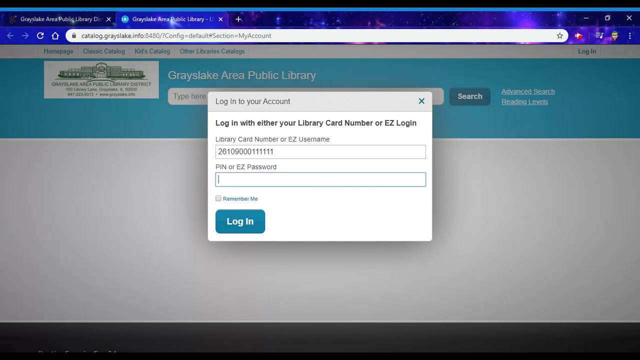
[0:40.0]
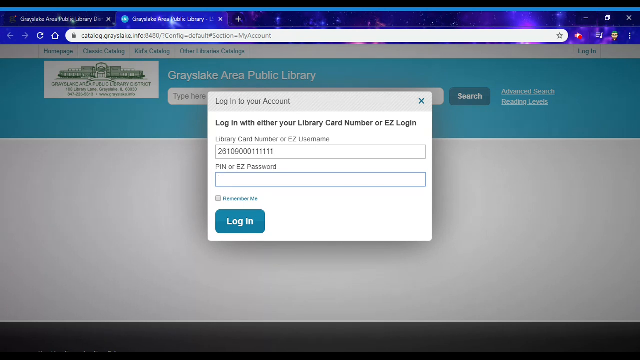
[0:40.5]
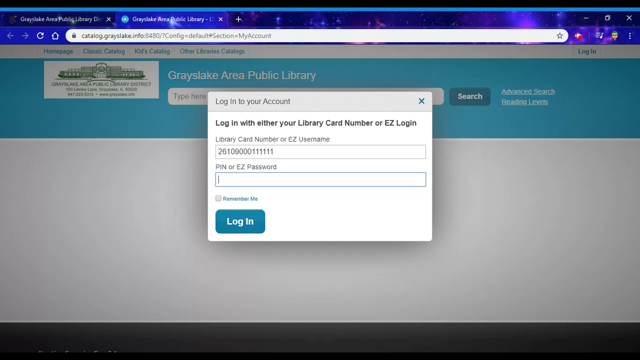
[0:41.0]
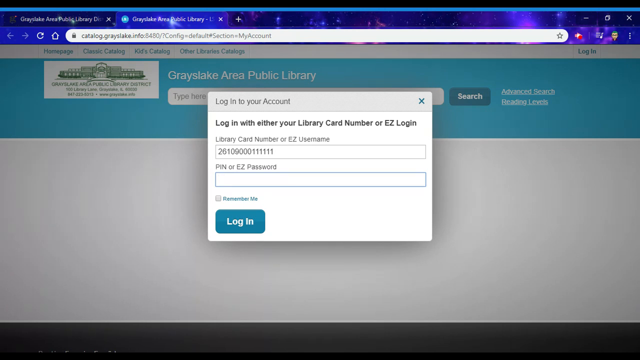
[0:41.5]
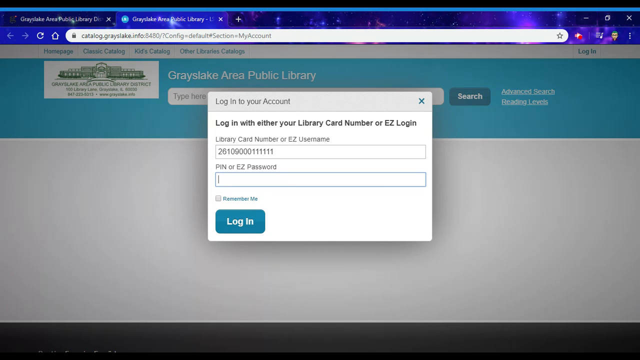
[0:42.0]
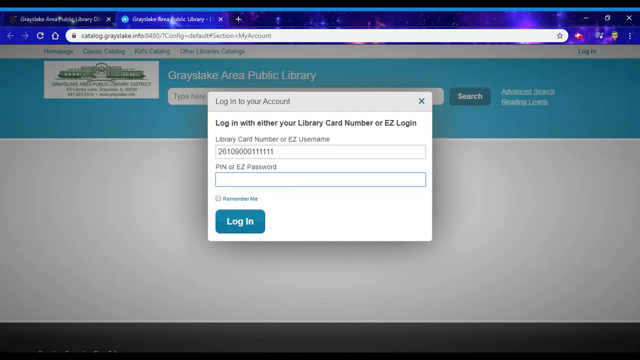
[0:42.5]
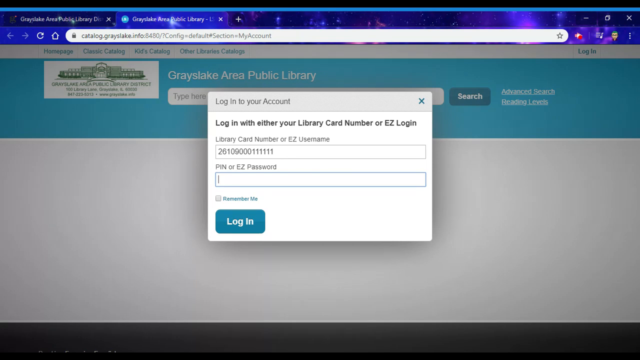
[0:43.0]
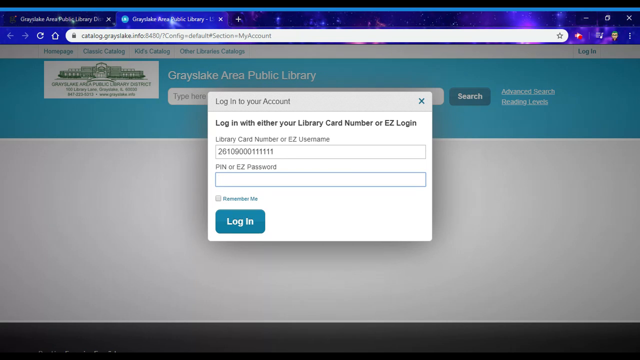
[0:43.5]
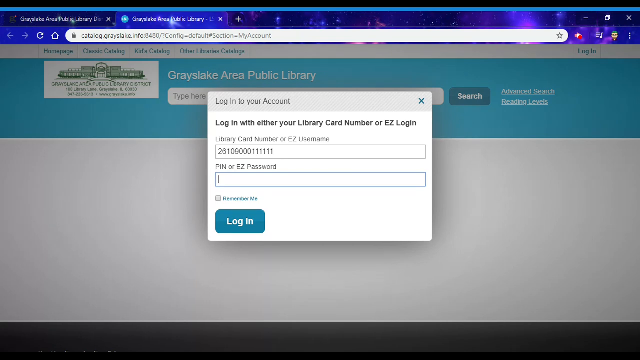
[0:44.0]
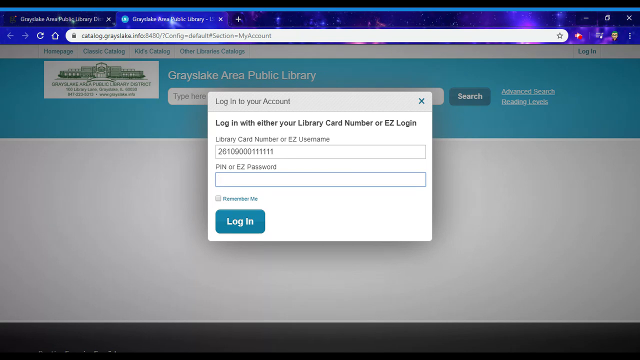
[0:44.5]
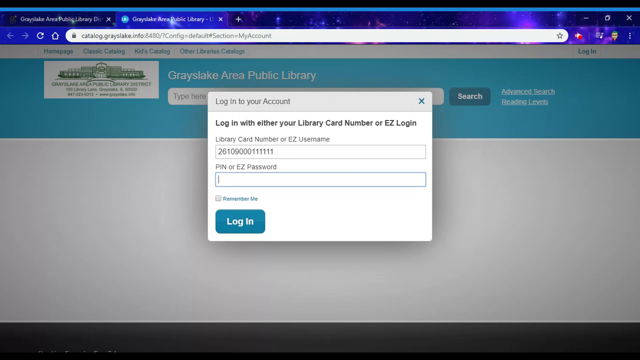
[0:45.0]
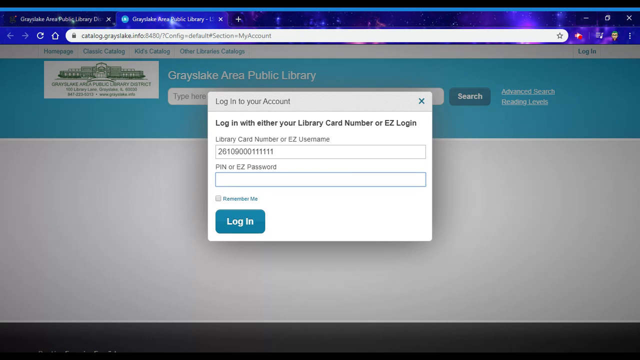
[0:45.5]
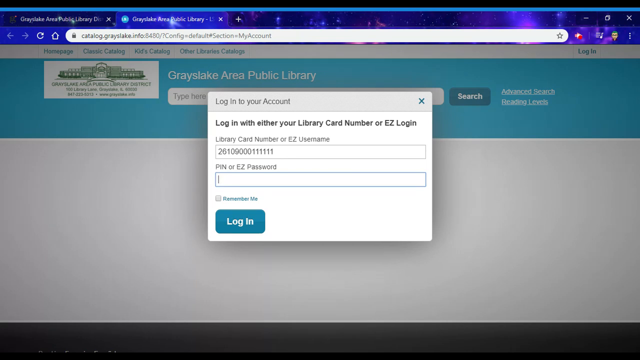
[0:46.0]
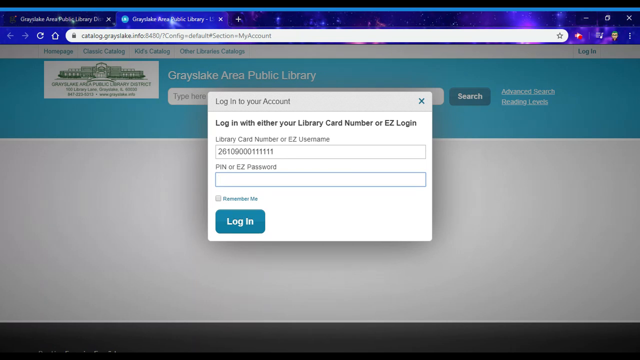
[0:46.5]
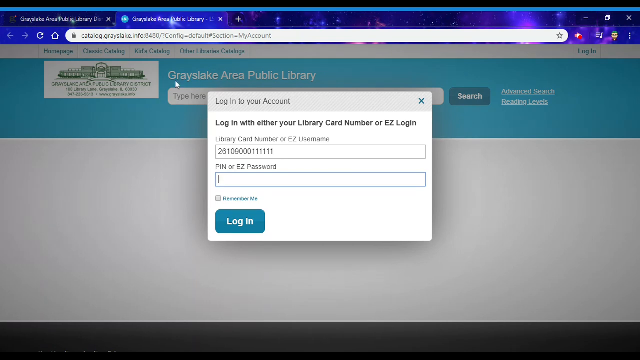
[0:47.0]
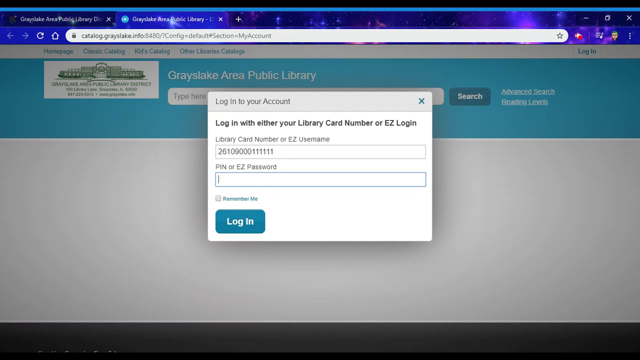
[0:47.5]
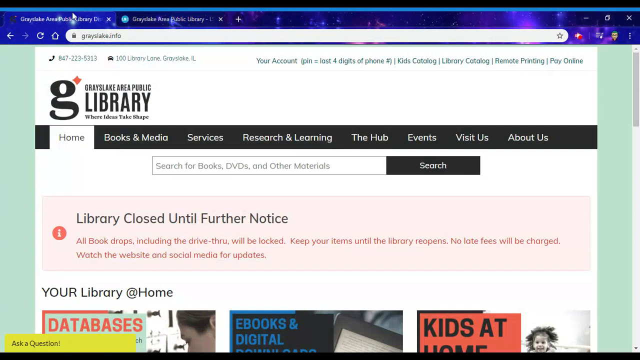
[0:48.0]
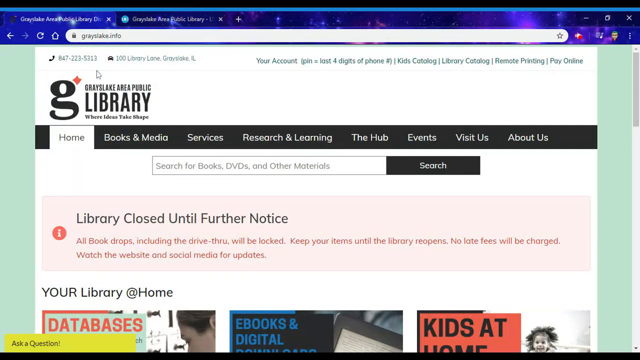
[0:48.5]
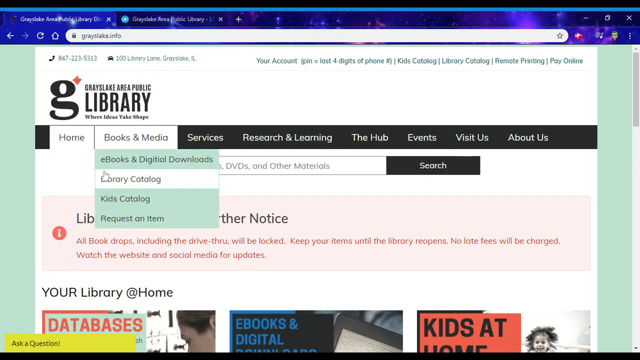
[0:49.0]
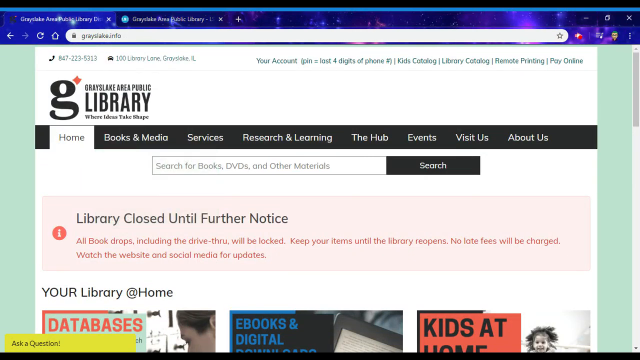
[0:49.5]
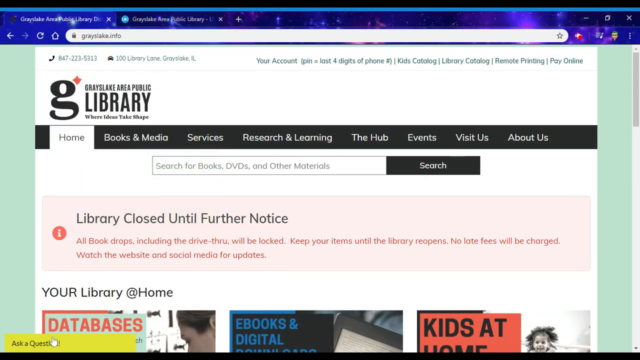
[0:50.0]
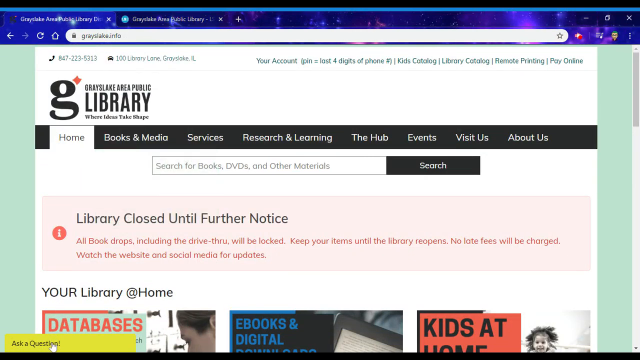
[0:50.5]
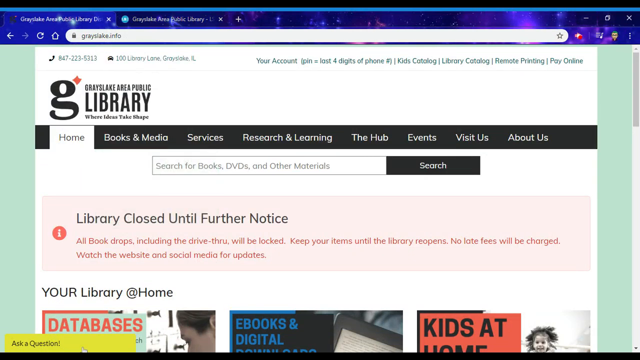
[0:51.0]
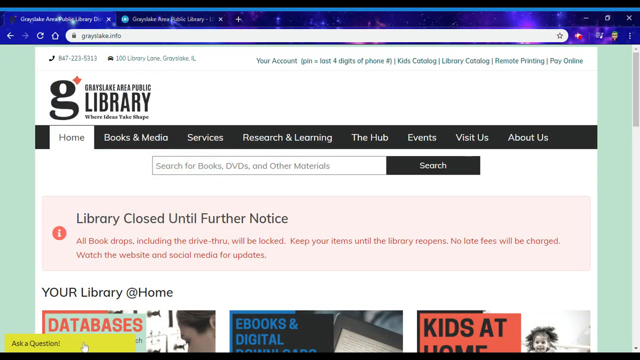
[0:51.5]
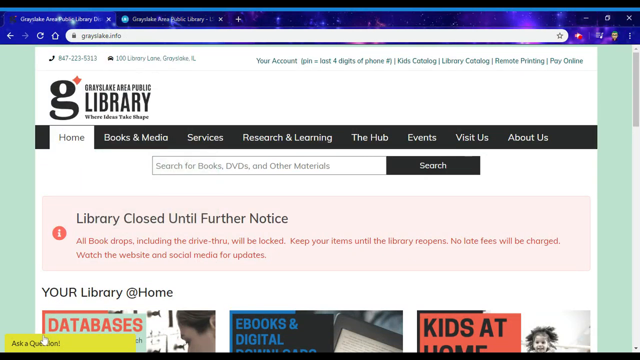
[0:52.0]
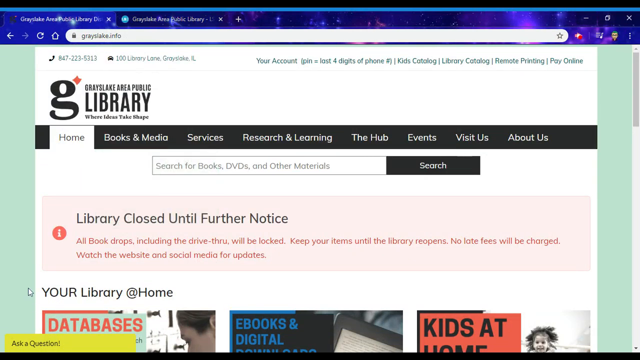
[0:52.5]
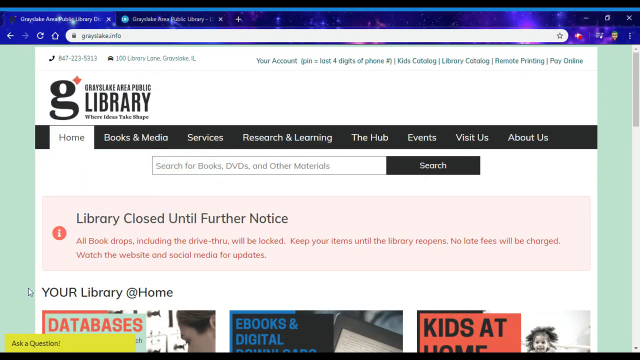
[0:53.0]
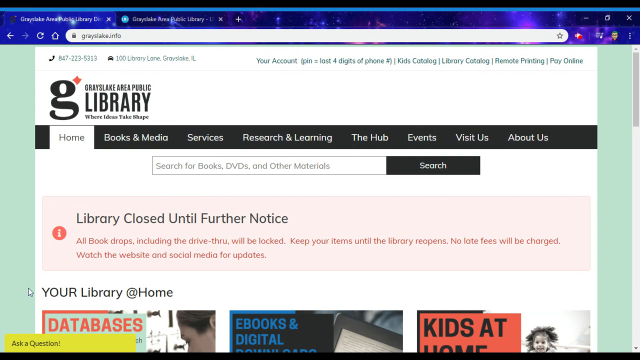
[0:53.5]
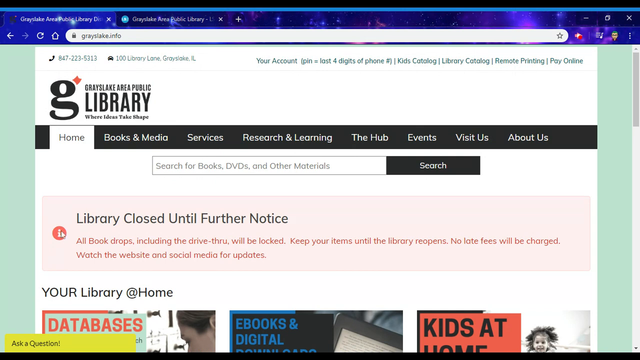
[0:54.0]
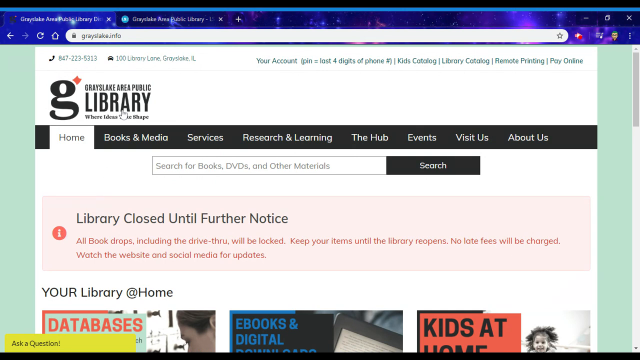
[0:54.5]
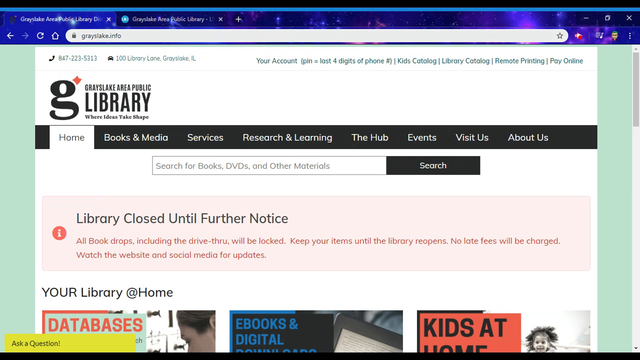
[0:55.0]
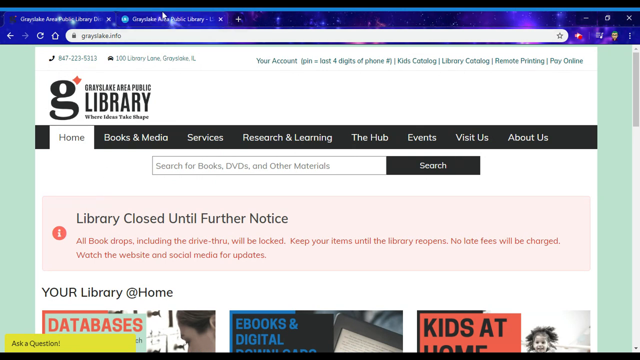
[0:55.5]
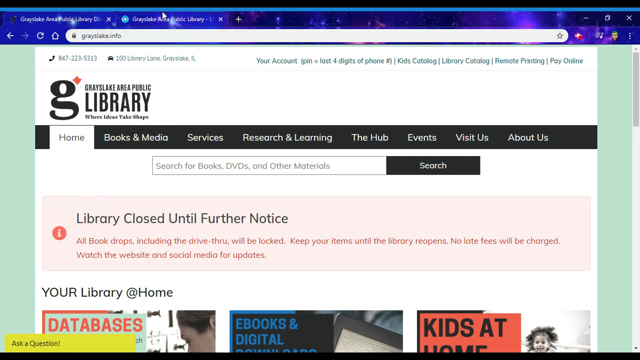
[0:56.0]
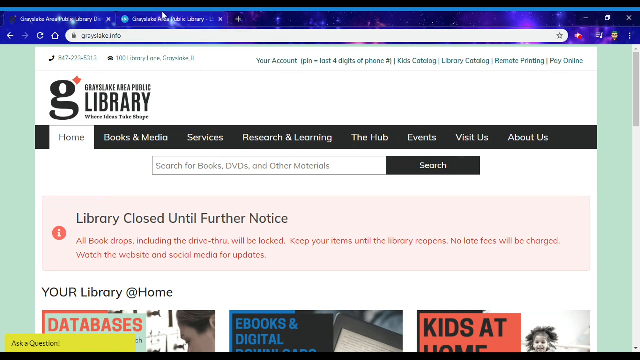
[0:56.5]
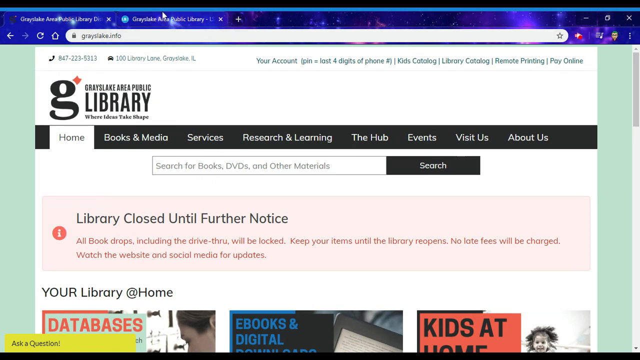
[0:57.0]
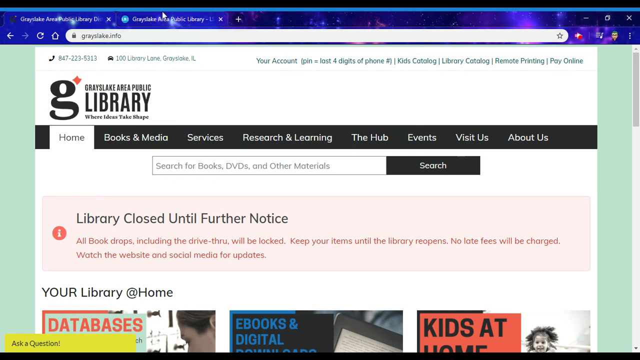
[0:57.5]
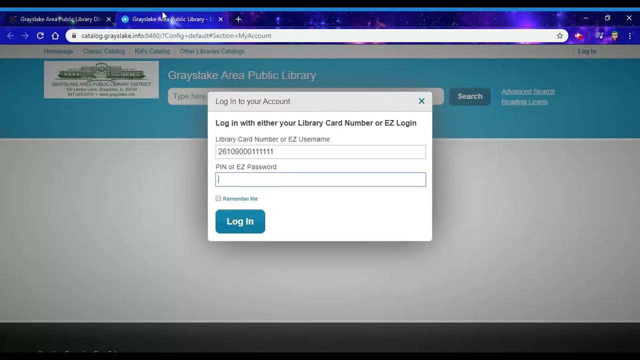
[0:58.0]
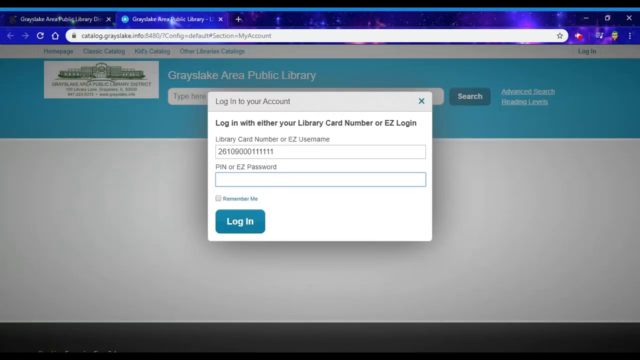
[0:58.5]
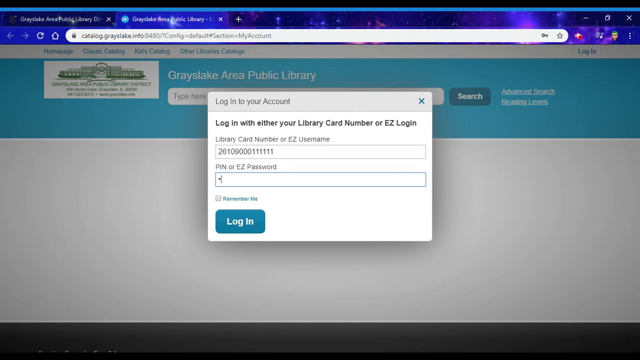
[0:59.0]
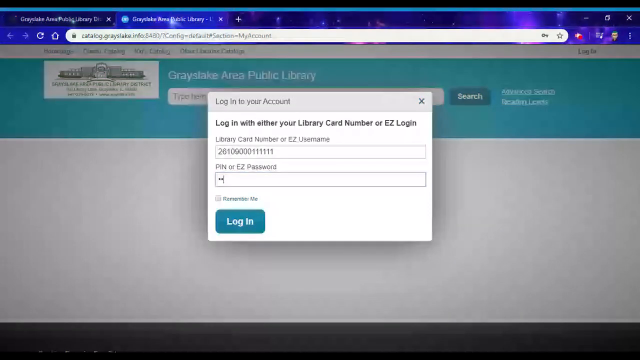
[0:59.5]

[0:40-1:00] The login pop-up for the Grayslake Area Public Library account is open in a separate tab from the library tab. The library card number has been entered, and the cursor is blinking in the PIN or E-ZPassword field. Instead of logging in, the user clicks back to the library tab and moves the cursor around, then goes back to the account tab and enters a PIN. Everything takes place in an internet browser, either Mozilla Firefox or Google Chrome, with a slight galaxy-type theme at the top.